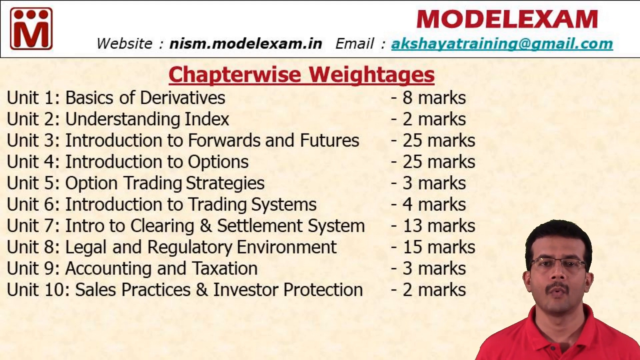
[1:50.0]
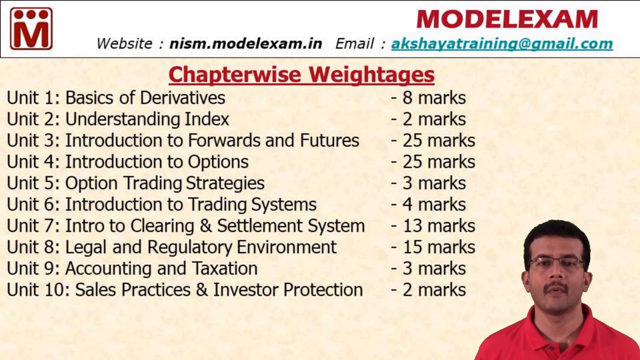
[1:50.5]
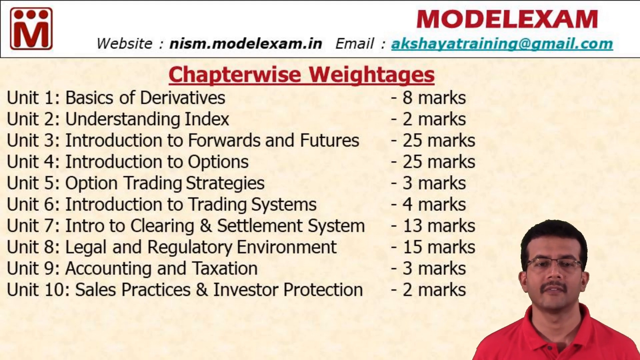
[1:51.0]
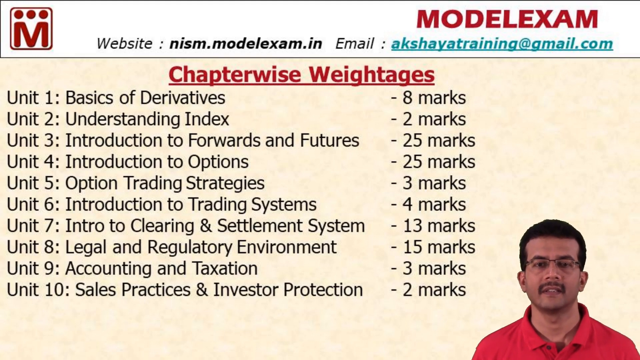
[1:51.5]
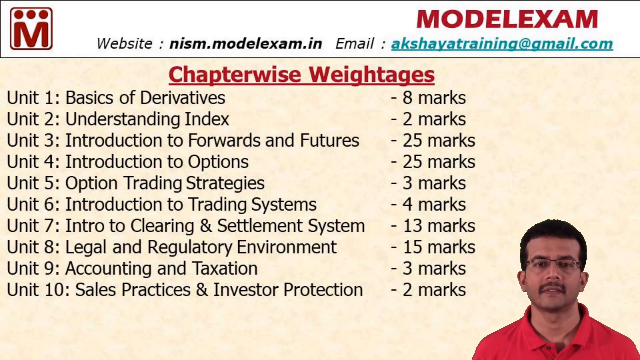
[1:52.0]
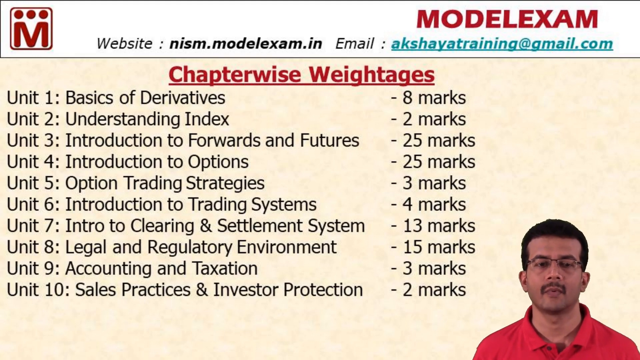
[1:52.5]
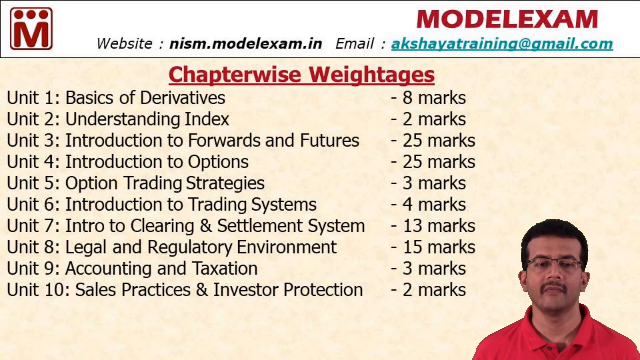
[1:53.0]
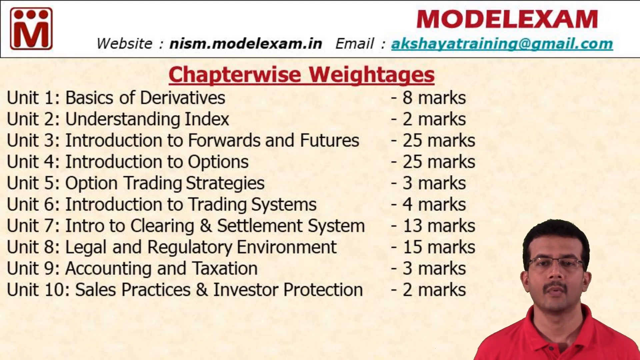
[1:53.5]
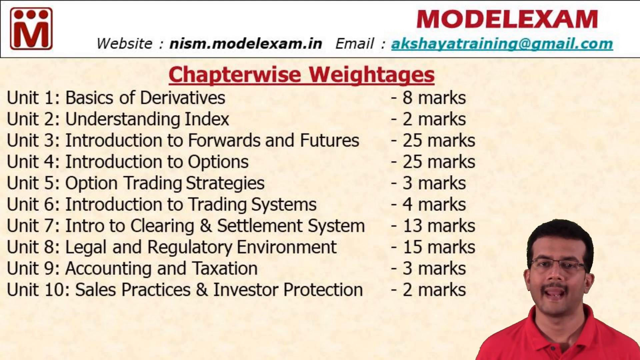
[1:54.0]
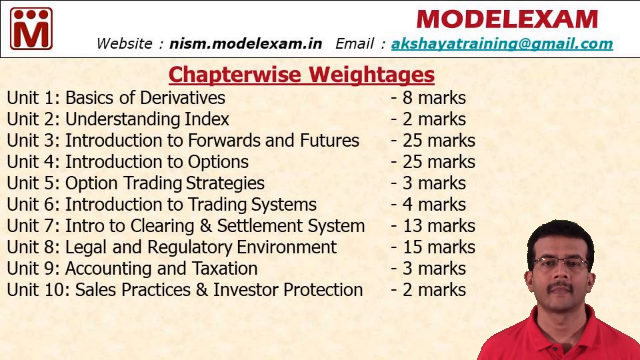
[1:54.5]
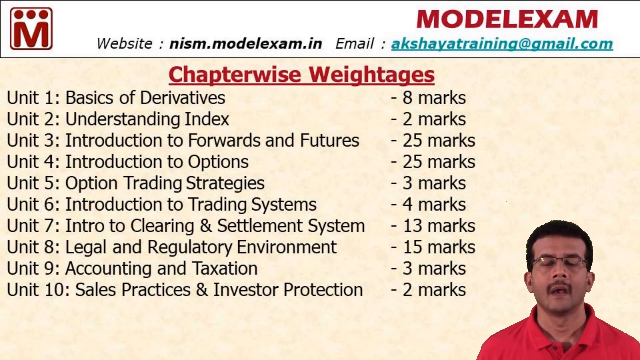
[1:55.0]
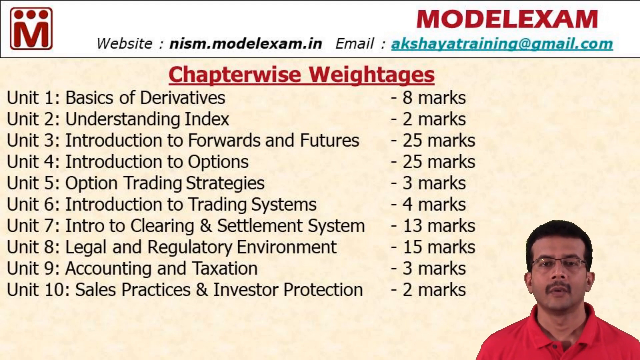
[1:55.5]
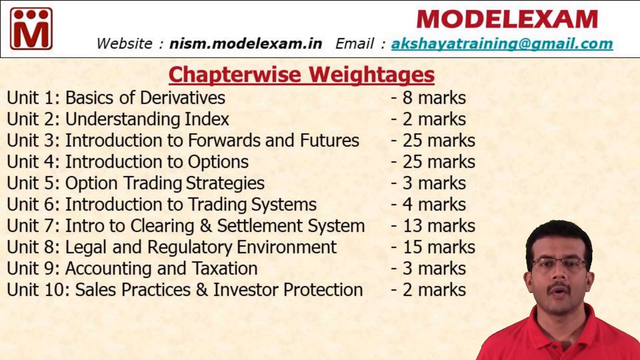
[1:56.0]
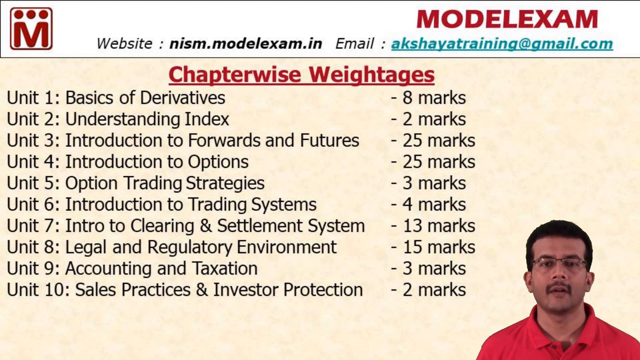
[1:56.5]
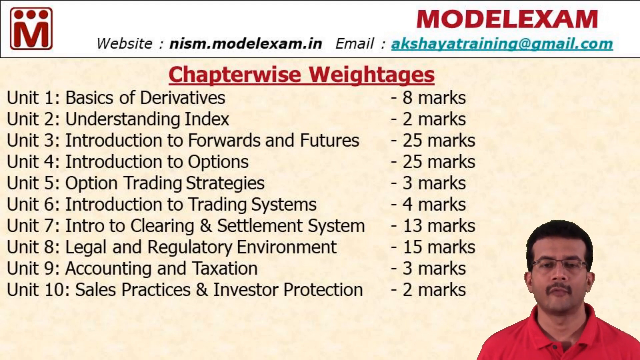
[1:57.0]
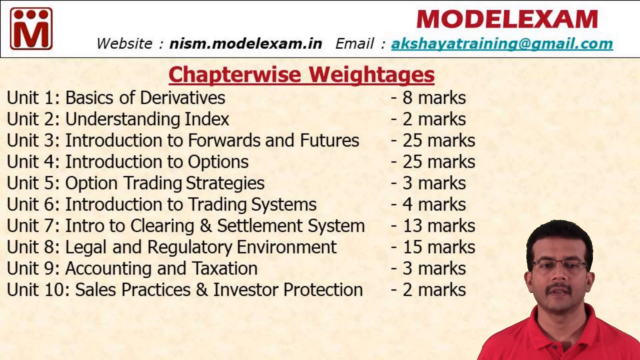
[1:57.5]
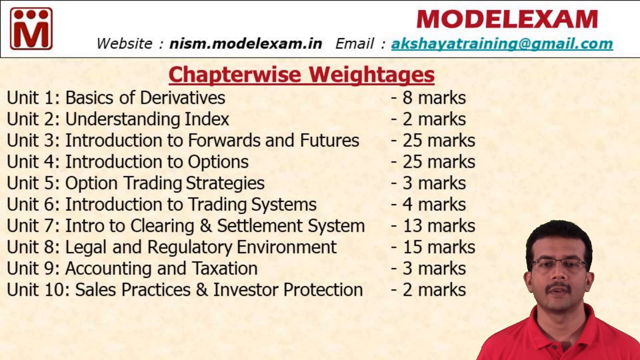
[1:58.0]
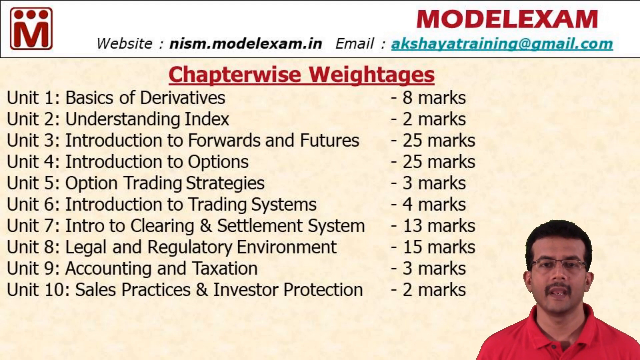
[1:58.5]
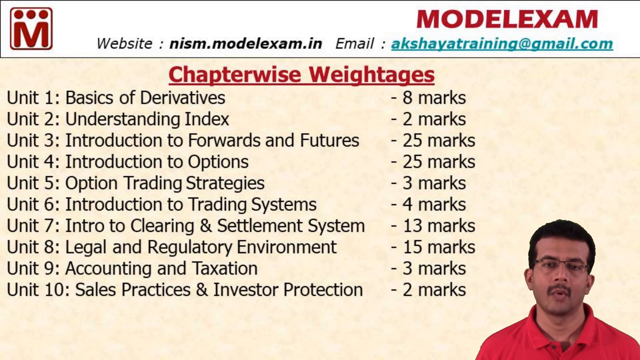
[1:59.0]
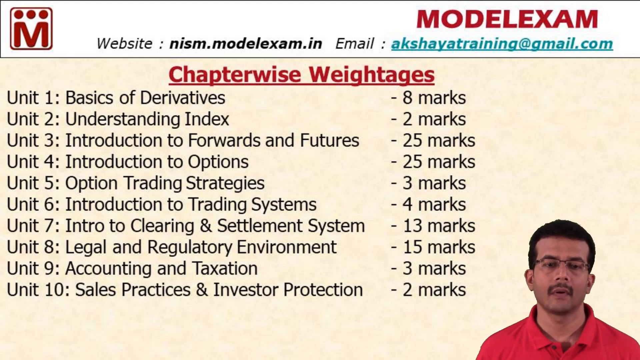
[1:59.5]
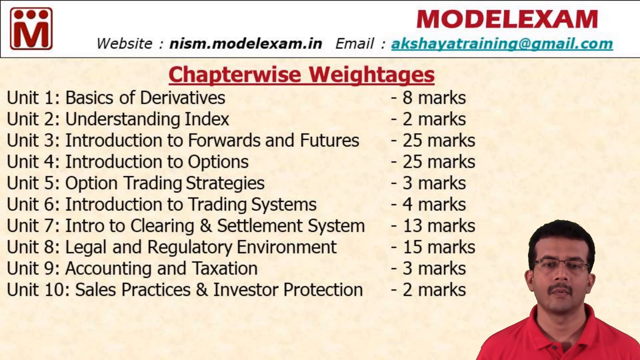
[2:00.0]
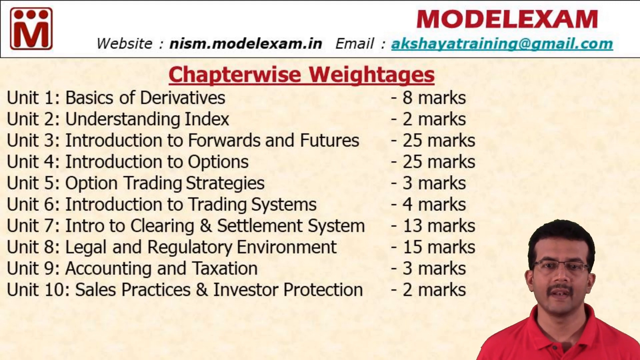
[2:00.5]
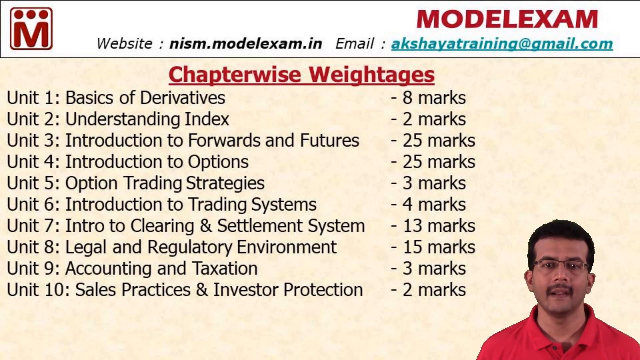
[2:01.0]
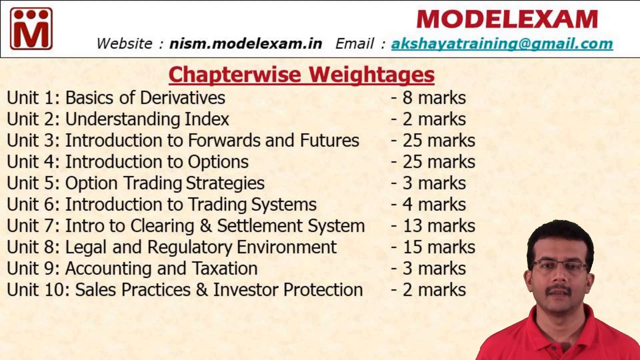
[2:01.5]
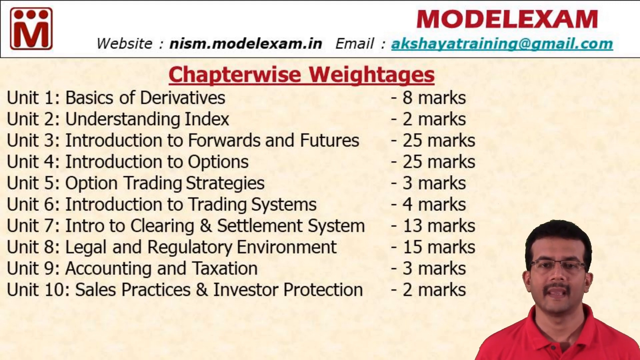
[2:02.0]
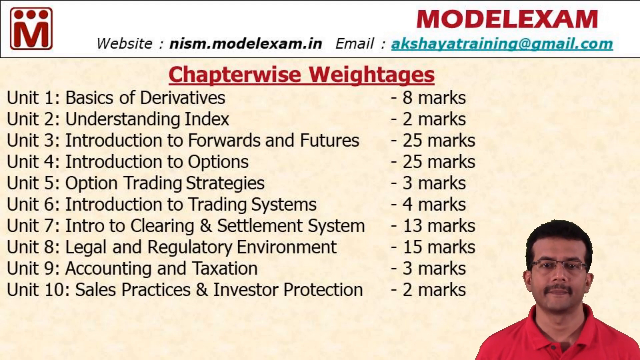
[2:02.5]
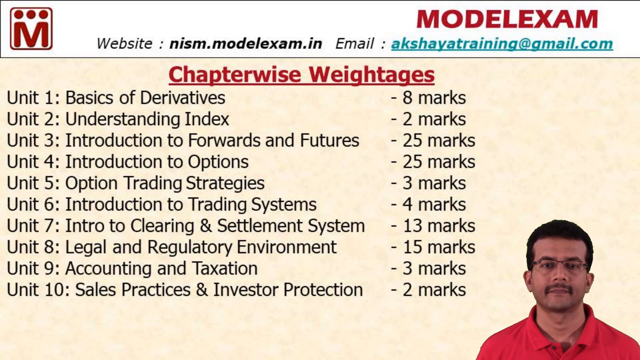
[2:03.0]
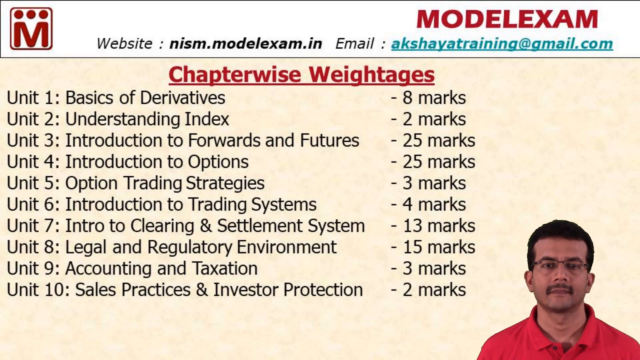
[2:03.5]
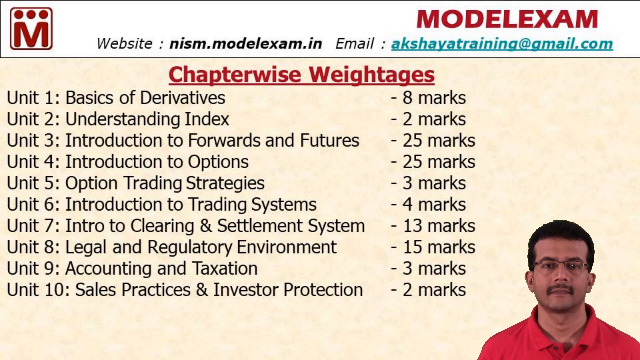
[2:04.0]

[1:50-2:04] The man is in the bottom right corner, visible from the shoulders up, wearing a red shirt with a folded-down collar and rectangular glasses. He has dark, close-cropped hair and a mustache, and he speaks directly to the camera. His eyes move down as they read off something in front of him, then move back up toward the camera. He appears to have a neutral expression, though a hint of a smile appears toward the end of the video, only a hint rather than a real smile. The slide remains static: its text, visuals, graphics and colors do not change.